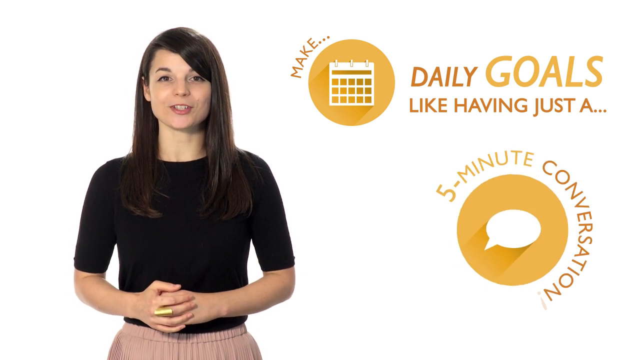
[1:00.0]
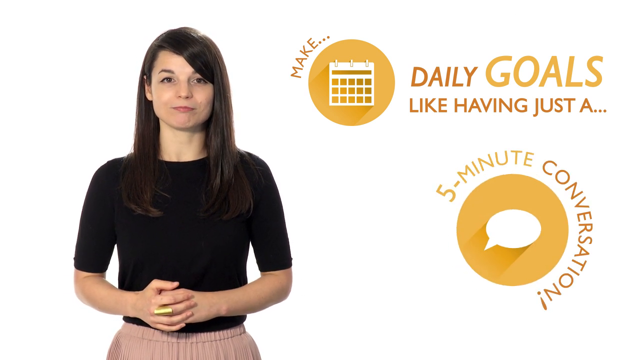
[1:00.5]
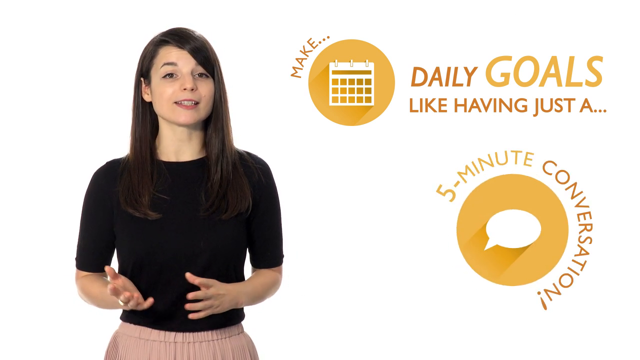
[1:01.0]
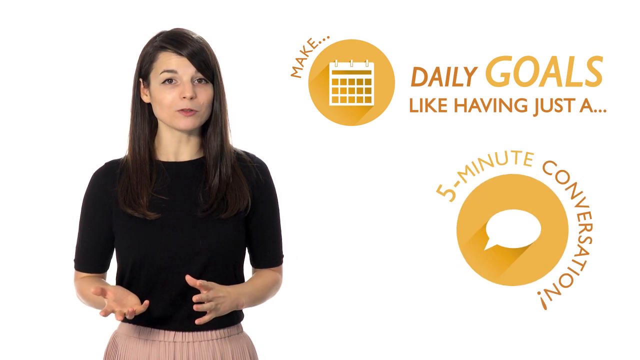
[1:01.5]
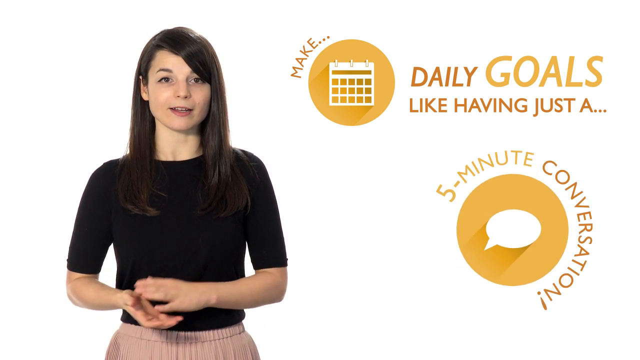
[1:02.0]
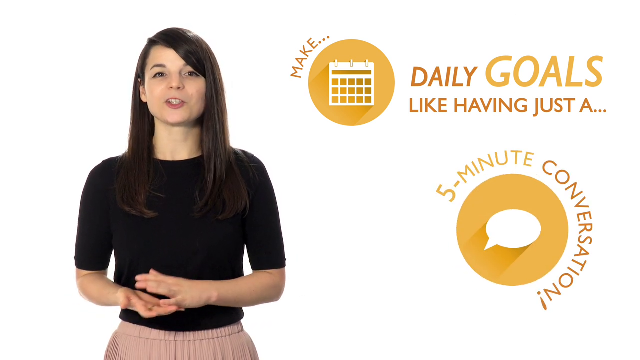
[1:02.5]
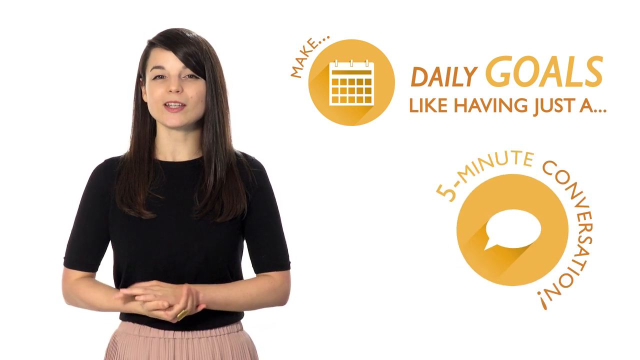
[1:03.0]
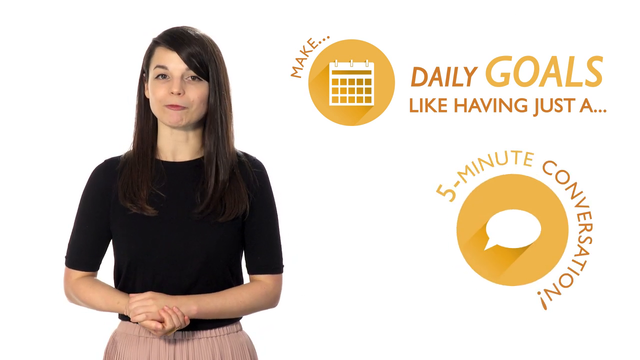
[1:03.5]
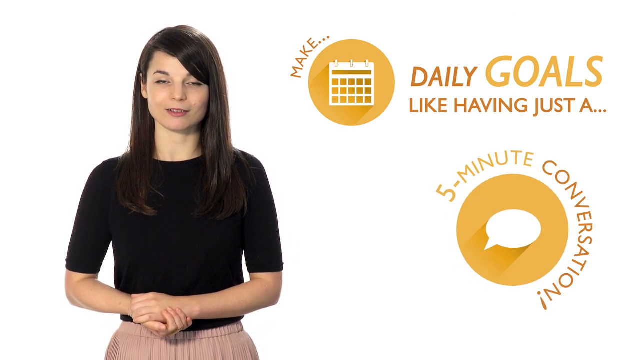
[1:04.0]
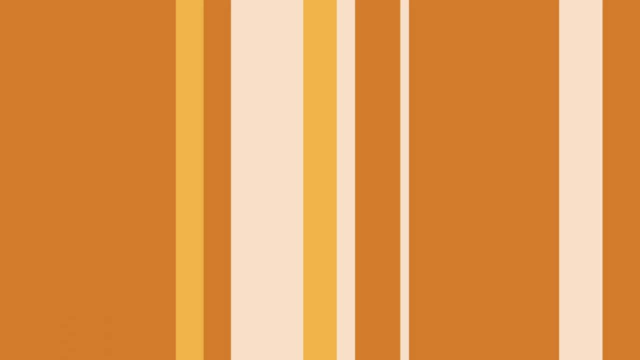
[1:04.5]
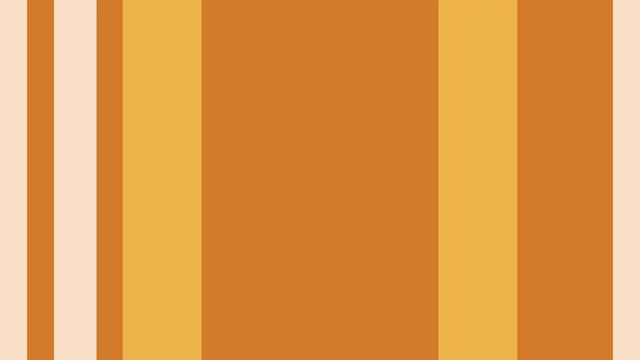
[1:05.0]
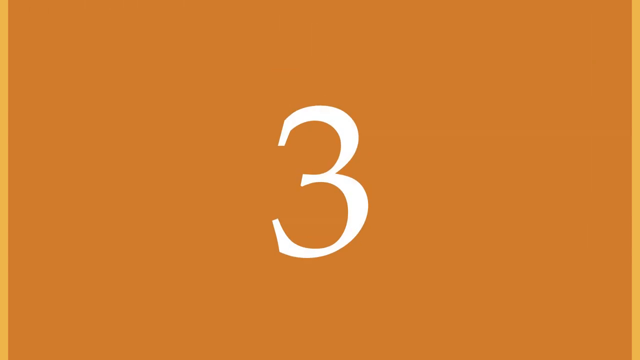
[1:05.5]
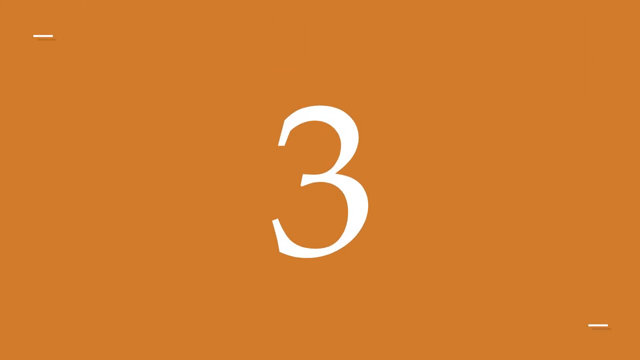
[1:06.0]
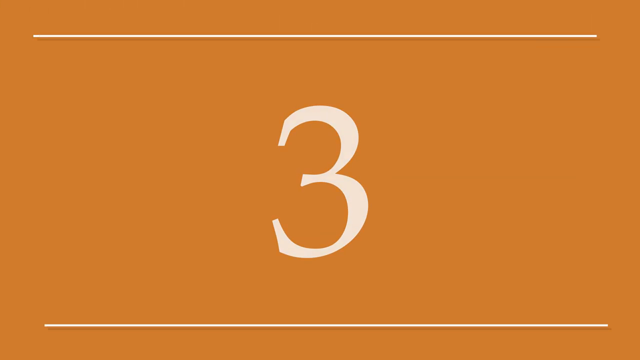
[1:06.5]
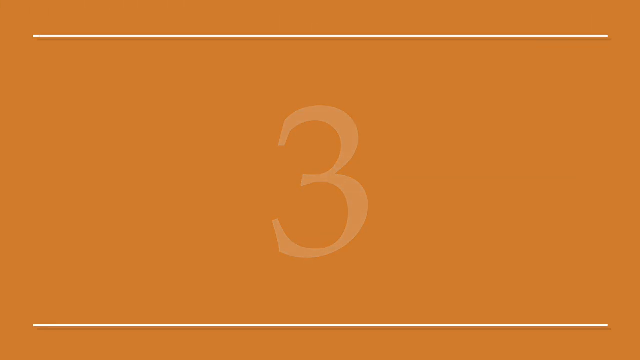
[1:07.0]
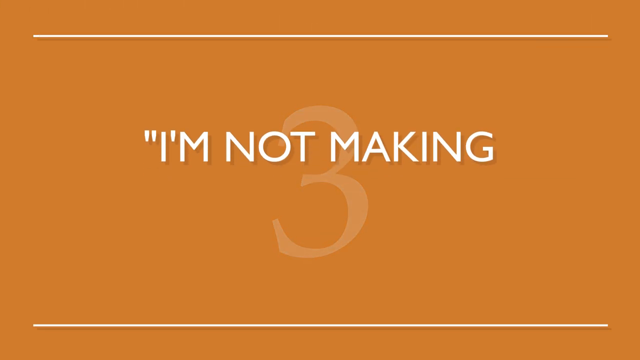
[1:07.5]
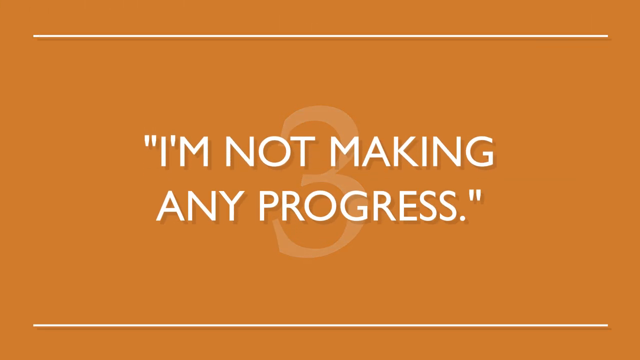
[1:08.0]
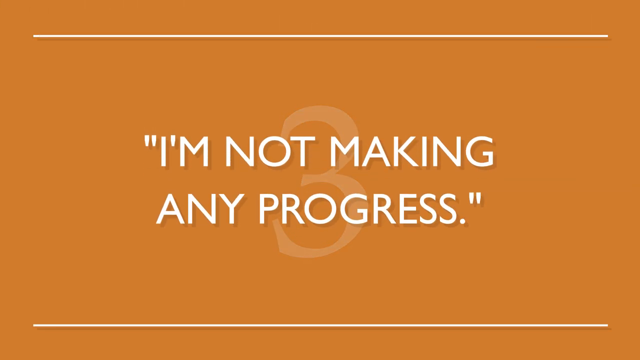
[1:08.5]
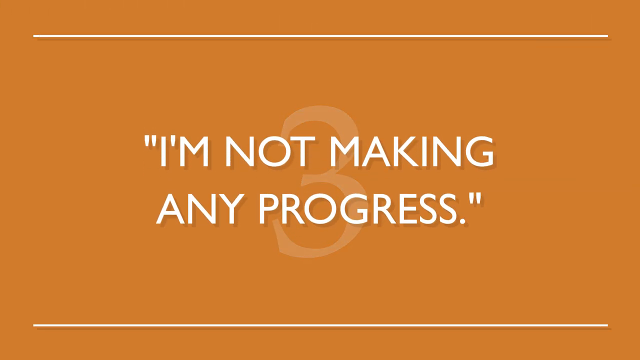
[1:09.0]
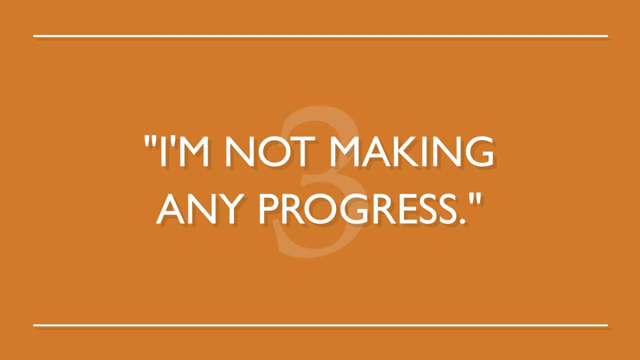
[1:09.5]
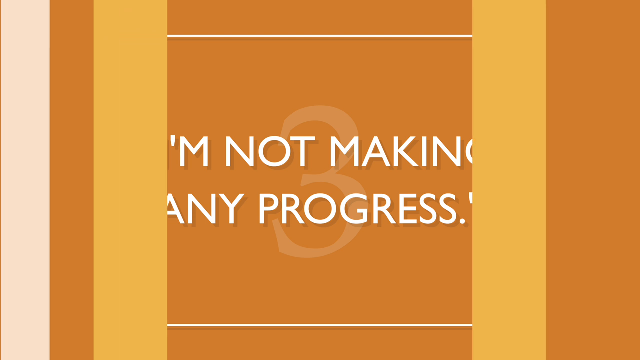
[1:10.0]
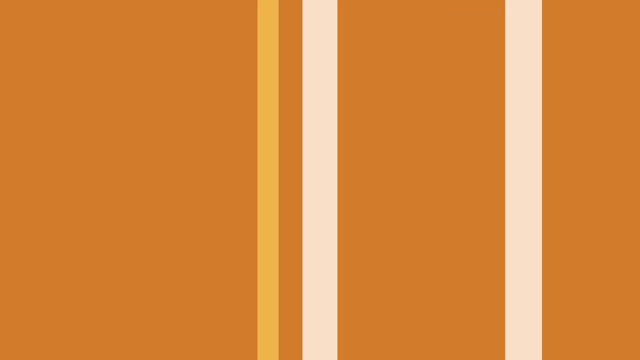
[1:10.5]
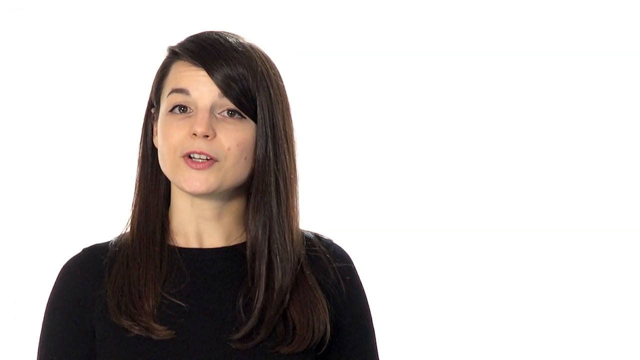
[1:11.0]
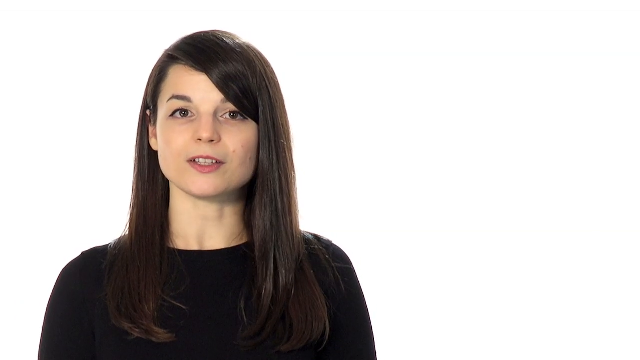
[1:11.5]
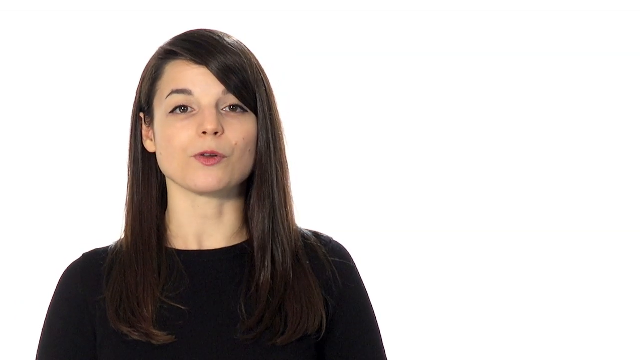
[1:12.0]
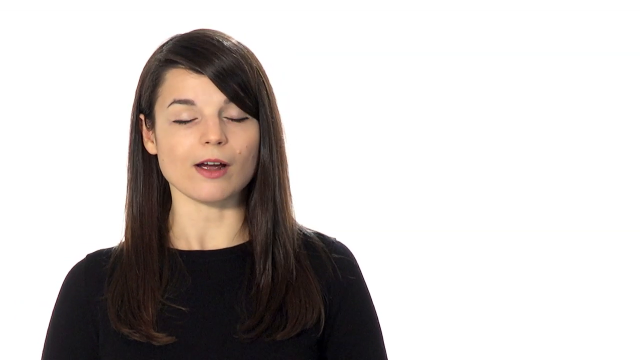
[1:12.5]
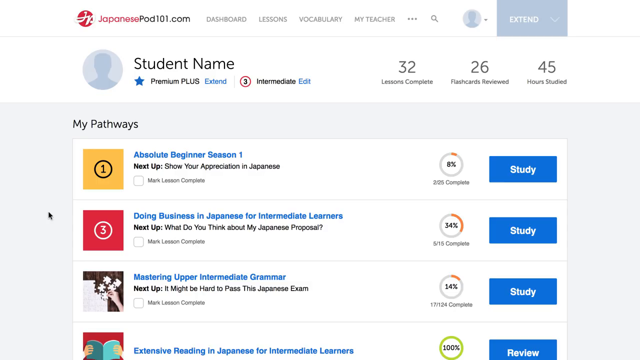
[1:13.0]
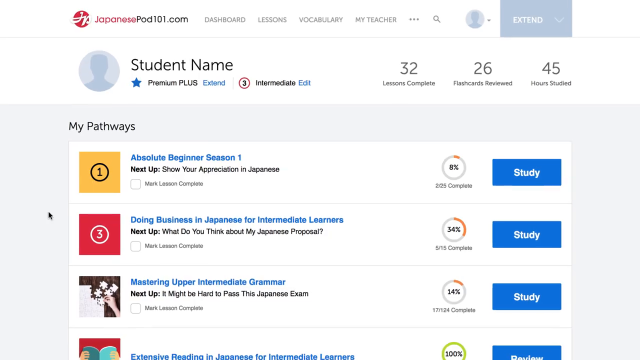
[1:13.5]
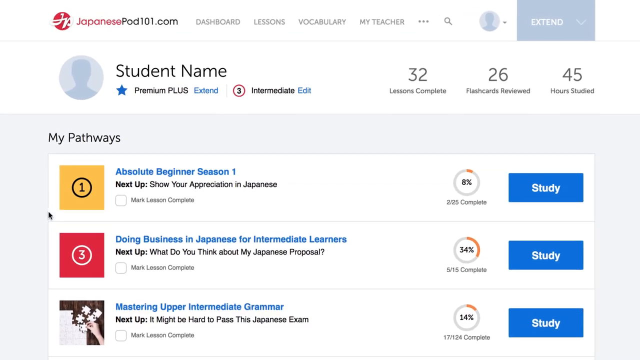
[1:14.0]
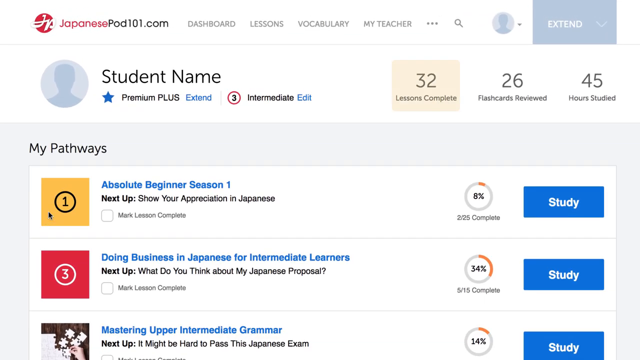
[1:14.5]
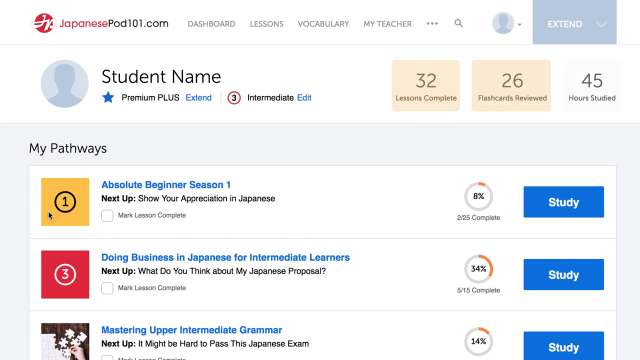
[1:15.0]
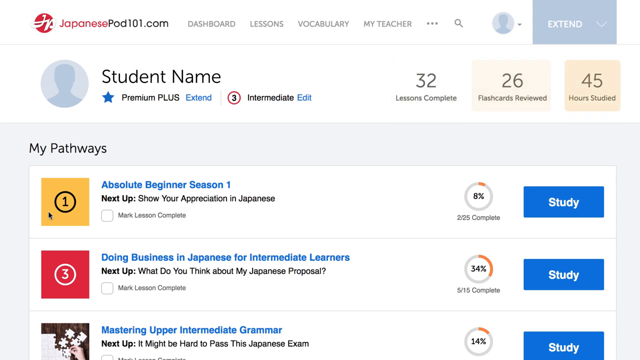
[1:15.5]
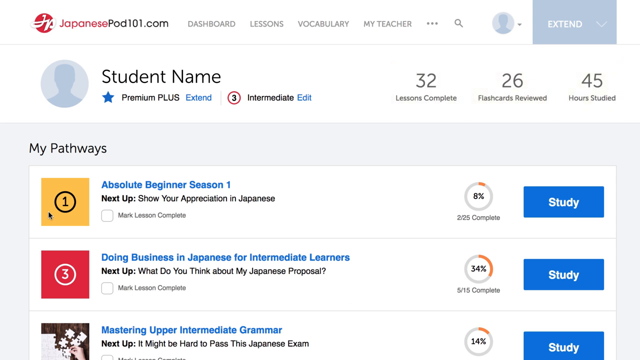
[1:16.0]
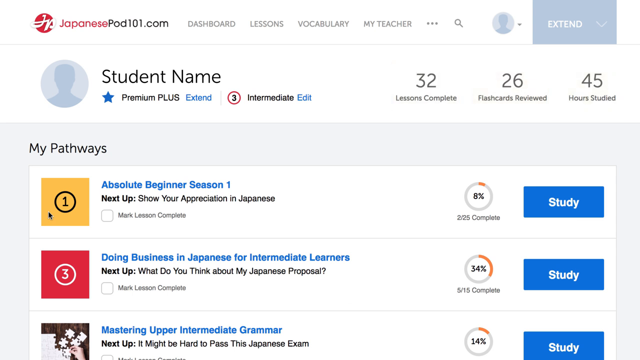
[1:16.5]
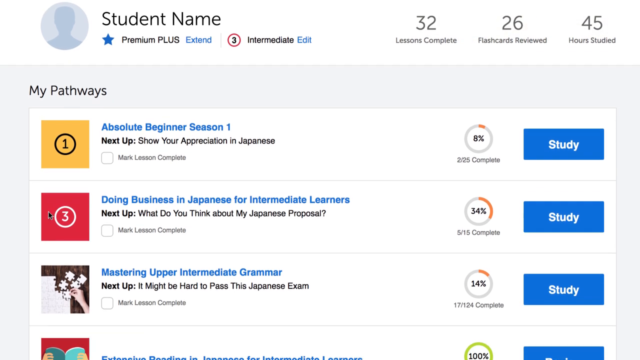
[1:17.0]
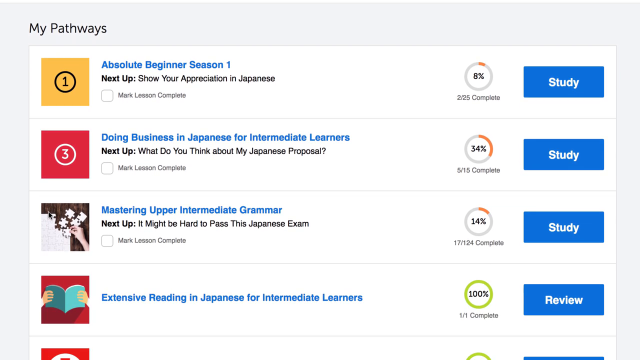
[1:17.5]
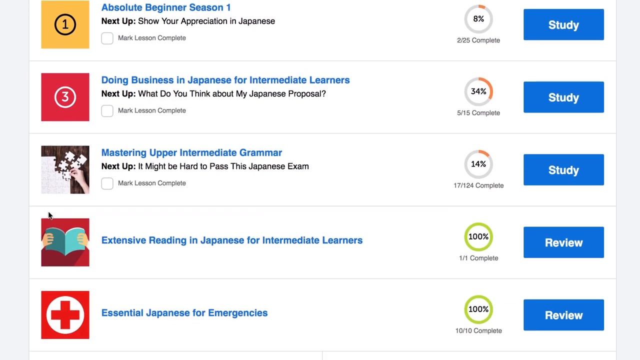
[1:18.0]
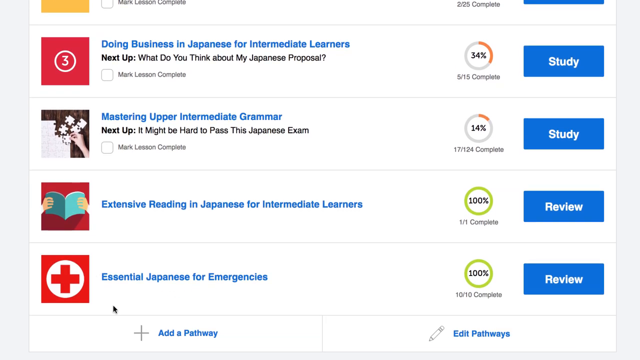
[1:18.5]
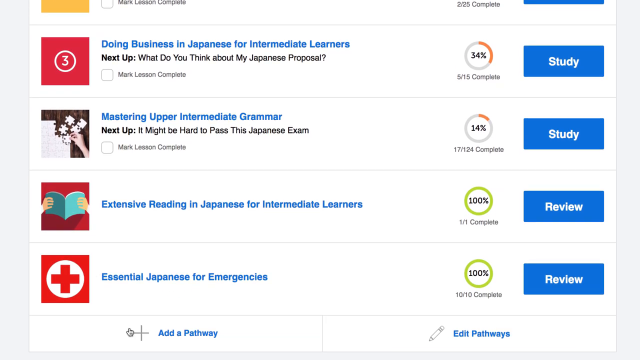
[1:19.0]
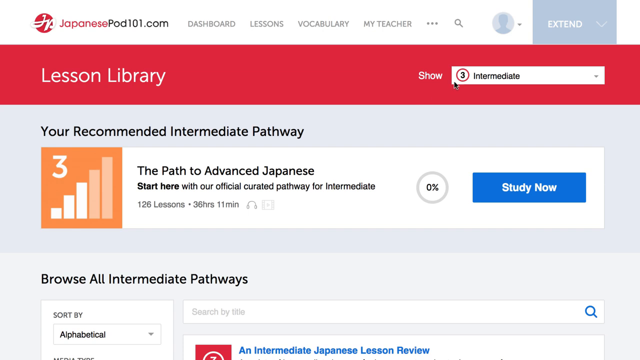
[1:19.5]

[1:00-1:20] The woman continues speaking to the camera on the left side of the screen, making small hand gestures and moving her head ever so slightly, with the text still on the right side of the white area. Orange lines come in and transition smoothly to the number 3 on a dark orange screen, and a quote appears in white in front of it: "I'm not making any progress." More lines cover the text and transition smoothly back to the white screen, where the woman speaks on the left side. The video then cuts to a screenshot of the website JapanesePod101.com. It zooms in slightly, and orange boxes highlight the lessons complete, flashcards reviewed and hours studied sections at the top right of the site, beside the student name. The view scrolls down through different things to study, showing the percentage completed for each lesson. It then cuts to a lesson library on the website showing the recommended intermediate pathway, and the mouse moves up to a show section that reads level 3 intermediate.